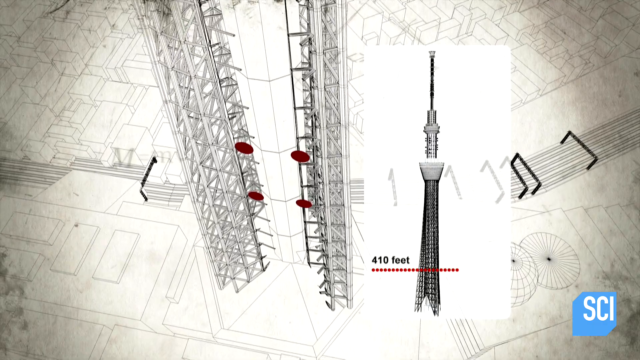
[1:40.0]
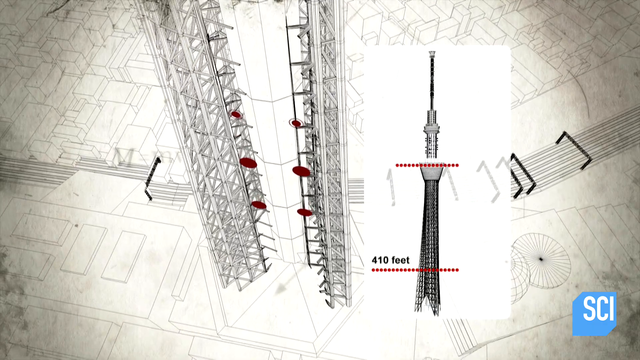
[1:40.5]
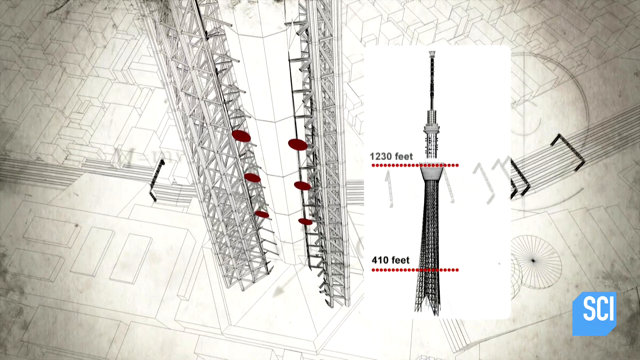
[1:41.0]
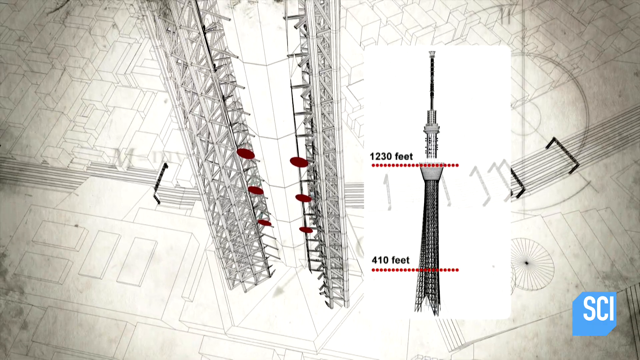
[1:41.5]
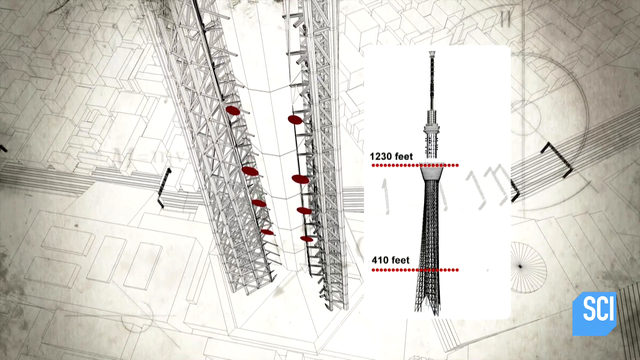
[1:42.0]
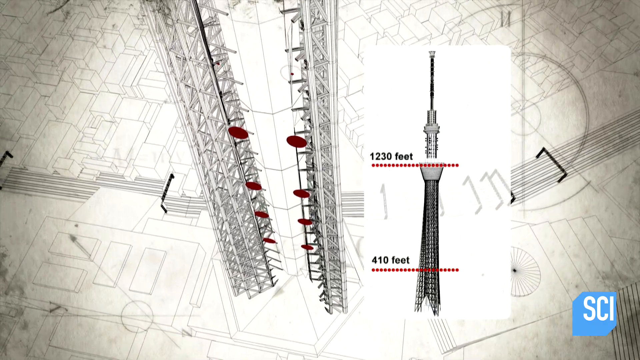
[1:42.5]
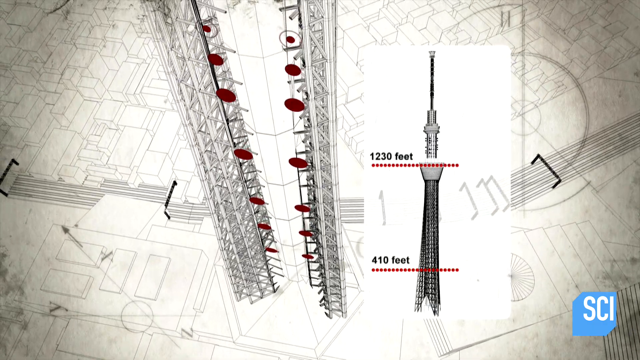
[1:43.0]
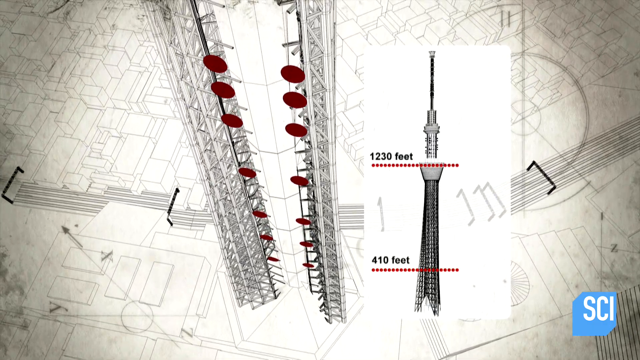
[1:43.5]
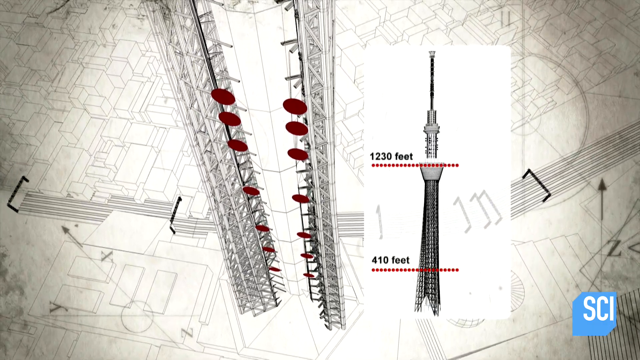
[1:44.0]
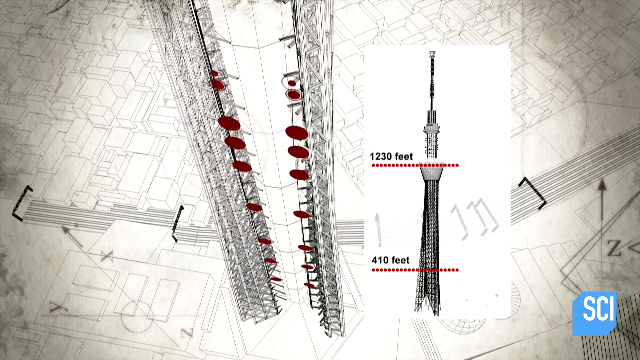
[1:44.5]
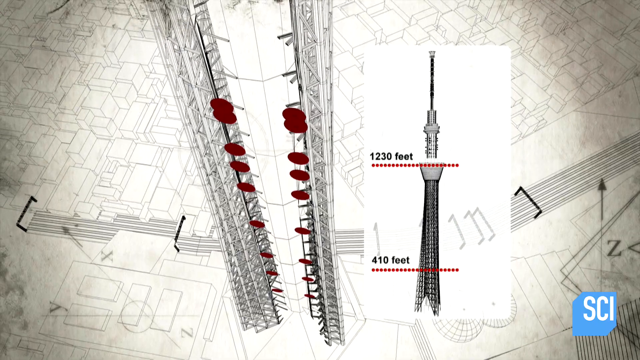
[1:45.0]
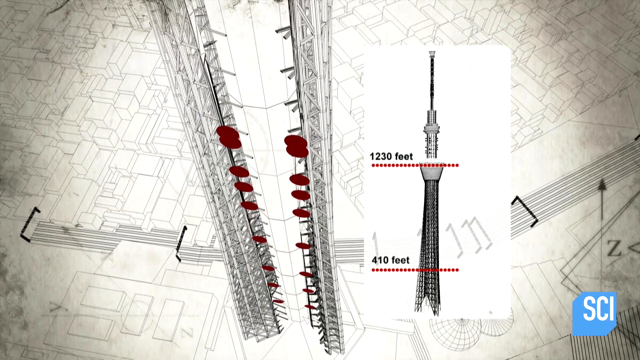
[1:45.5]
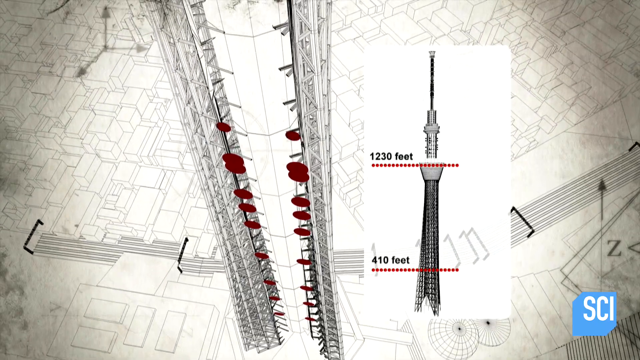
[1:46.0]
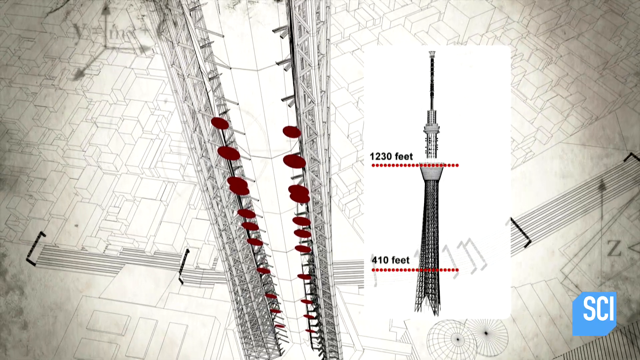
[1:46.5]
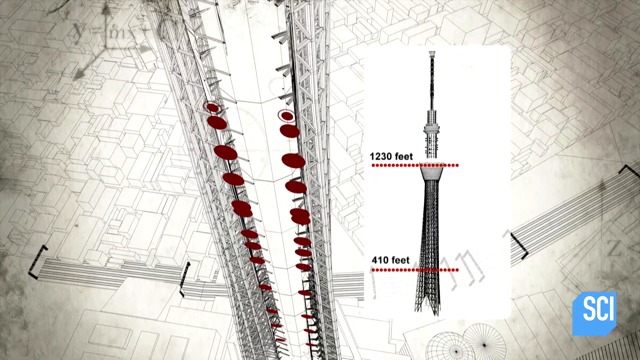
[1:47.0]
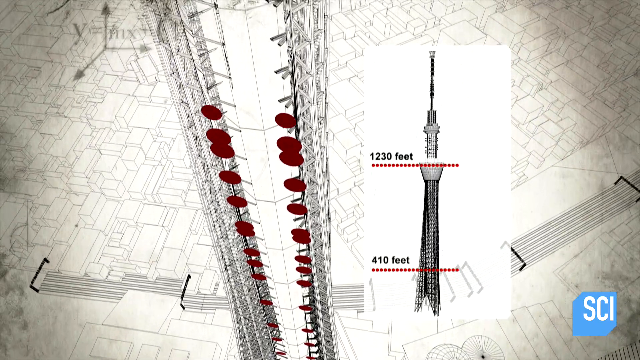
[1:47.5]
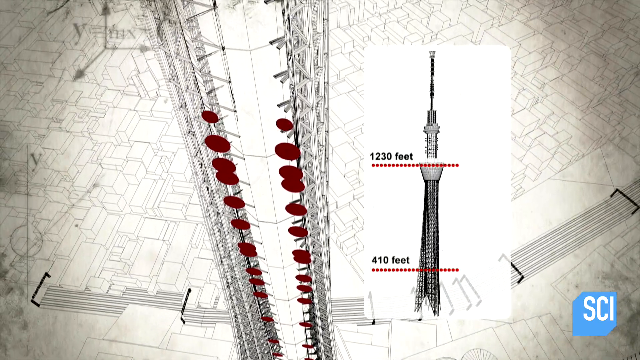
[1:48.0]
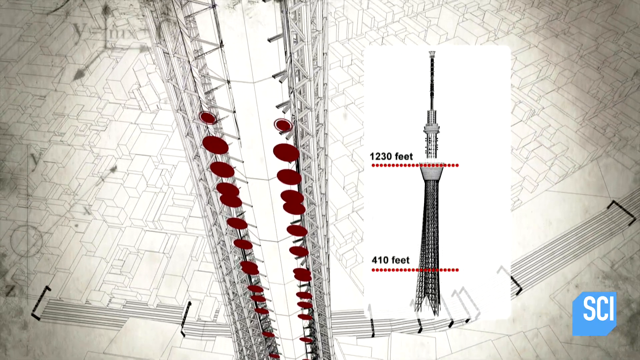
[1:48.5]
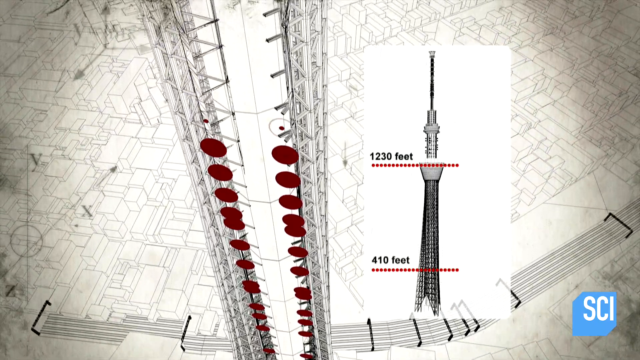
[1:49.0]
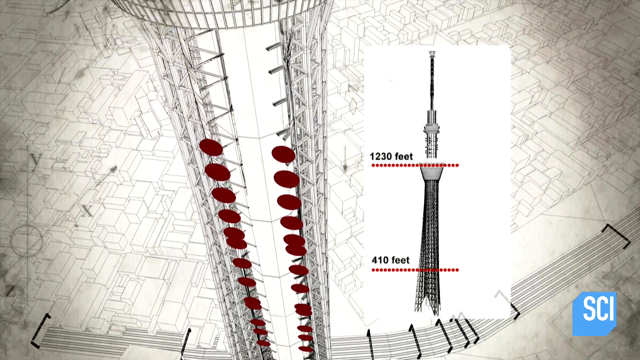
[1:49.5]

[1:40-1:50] A blueprint view of the column of the structure is shown, with the other buildings of the city underneath and the column itself in the main image in the middle. The camera keeps going up, showing different sections inside the middle of the column, and red dots mark sections of the column. On the right is a far-out, blueprint-style image of the column, which reads "410 feet" at the bottom and "1230 feet" toward the top of the column.